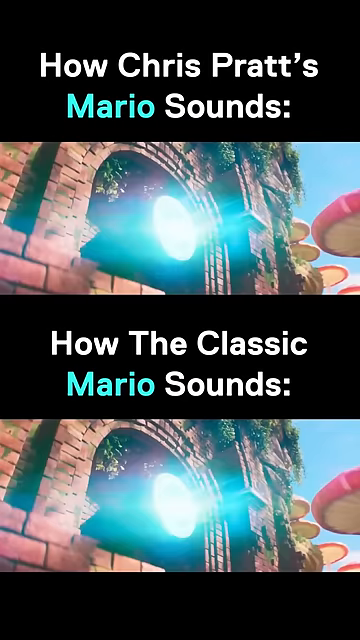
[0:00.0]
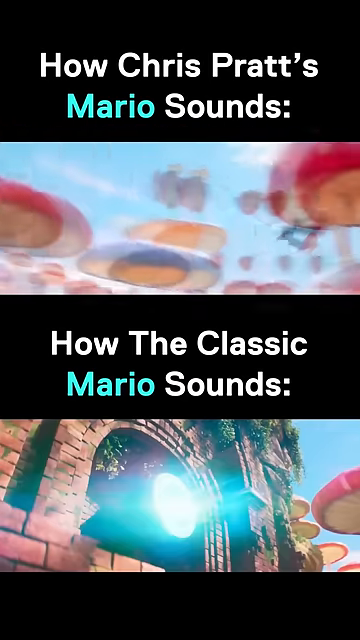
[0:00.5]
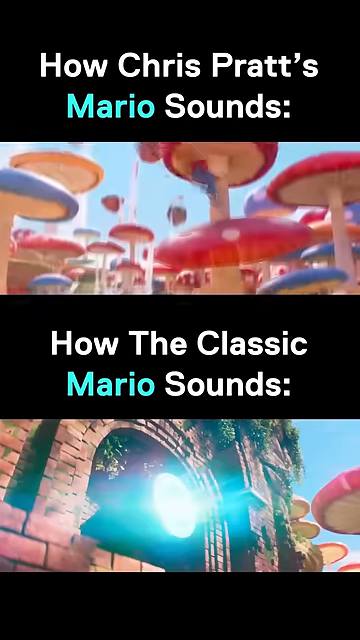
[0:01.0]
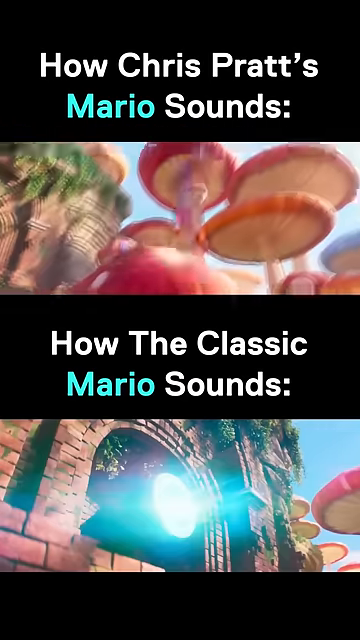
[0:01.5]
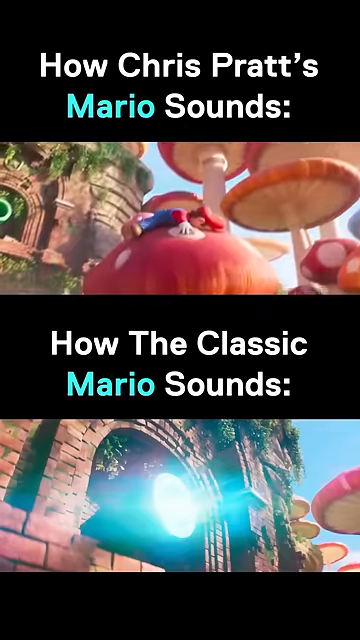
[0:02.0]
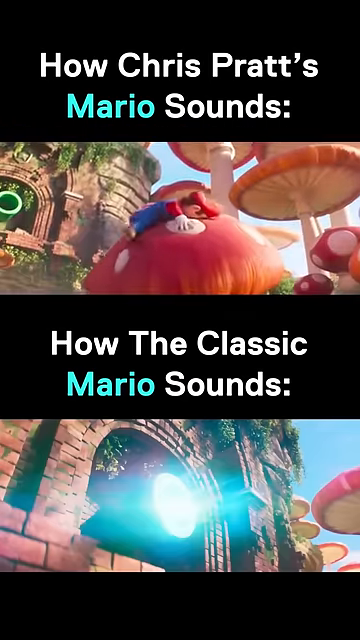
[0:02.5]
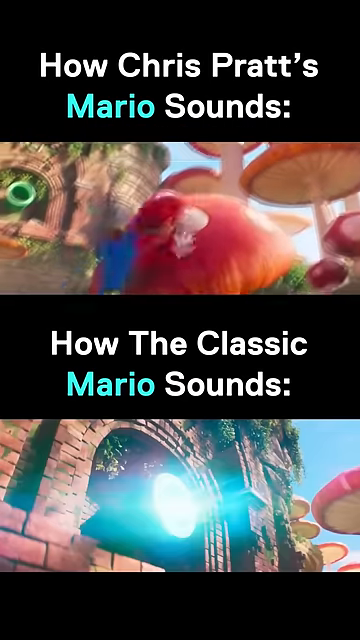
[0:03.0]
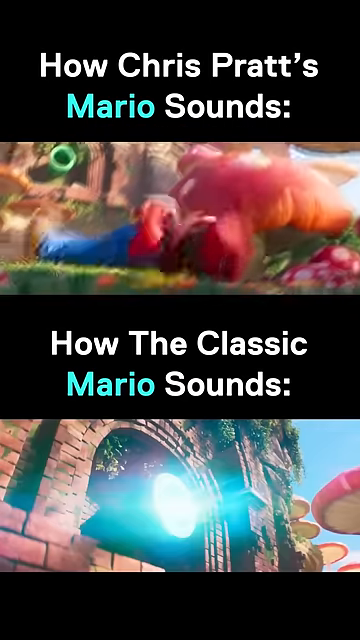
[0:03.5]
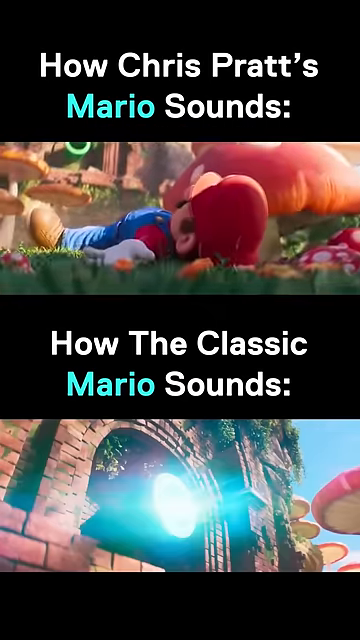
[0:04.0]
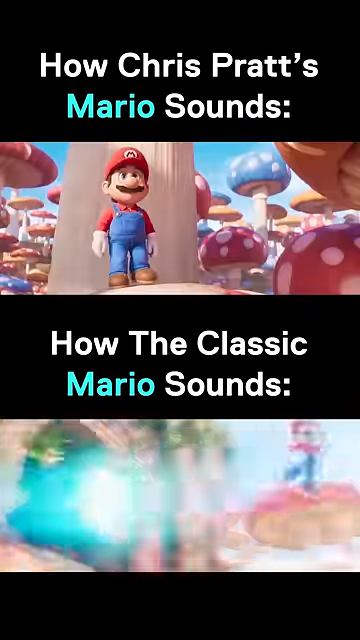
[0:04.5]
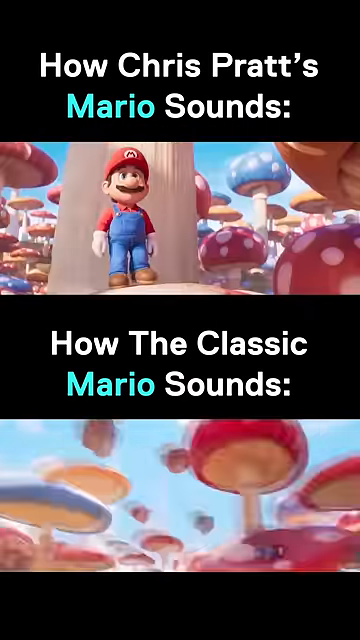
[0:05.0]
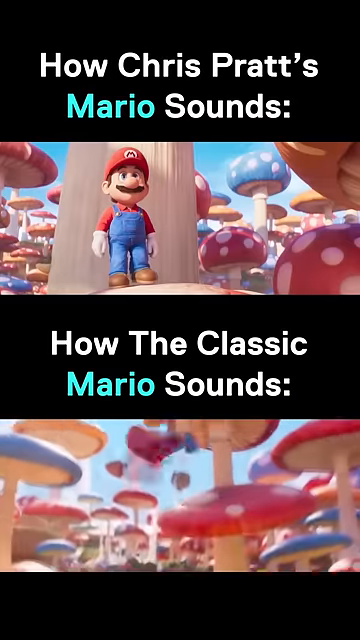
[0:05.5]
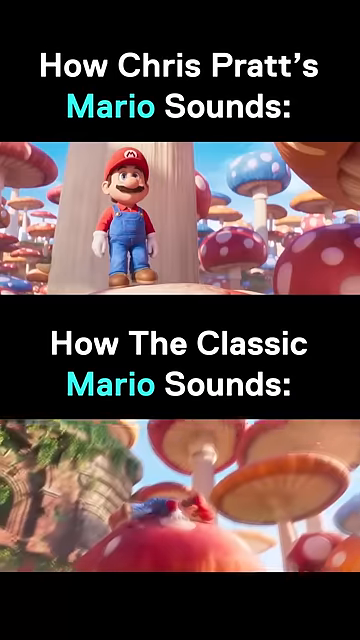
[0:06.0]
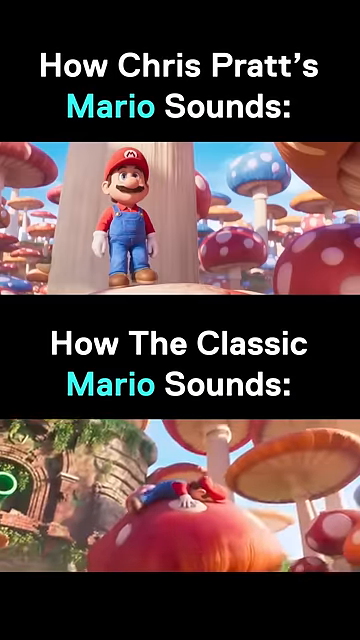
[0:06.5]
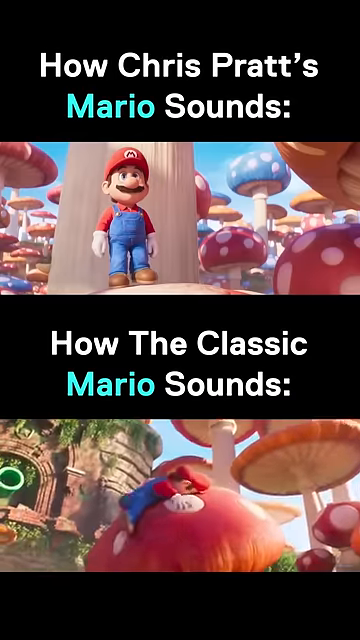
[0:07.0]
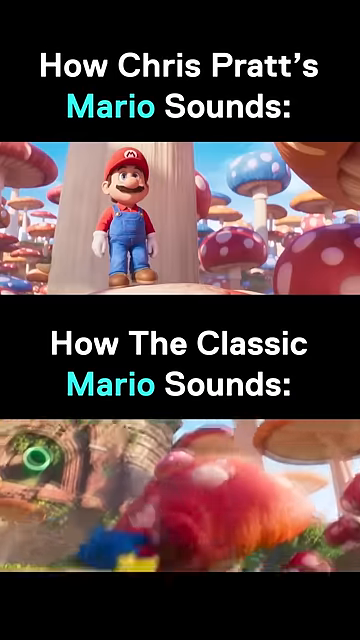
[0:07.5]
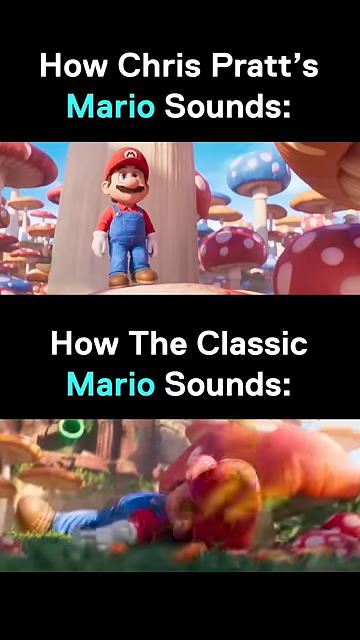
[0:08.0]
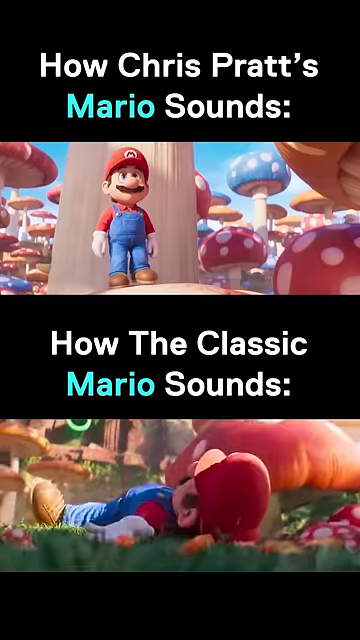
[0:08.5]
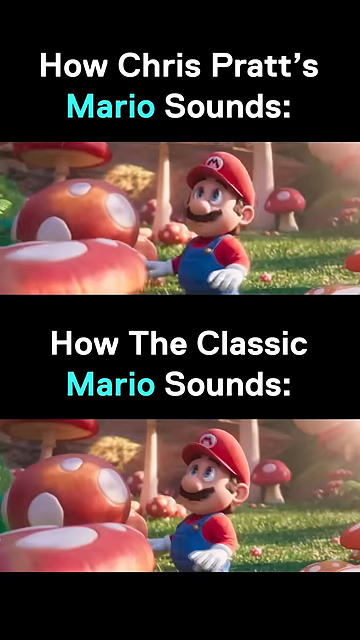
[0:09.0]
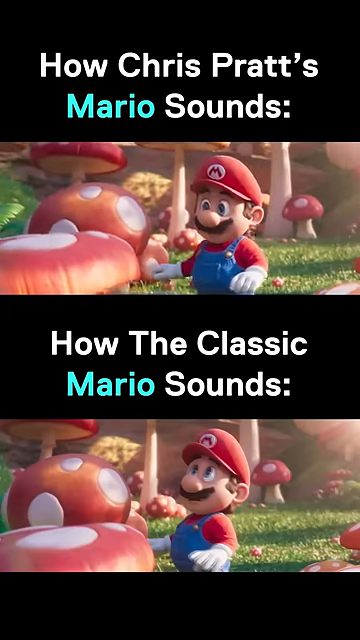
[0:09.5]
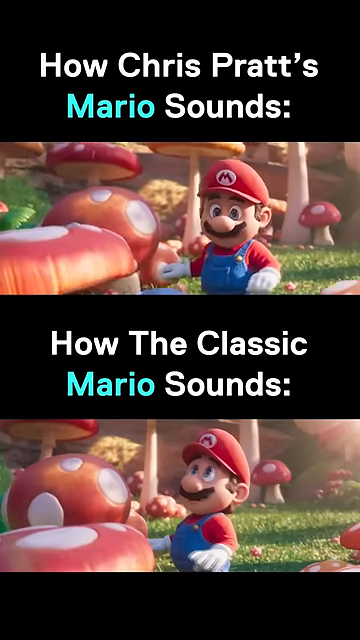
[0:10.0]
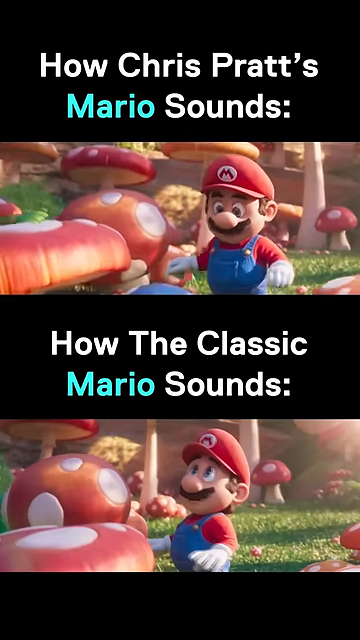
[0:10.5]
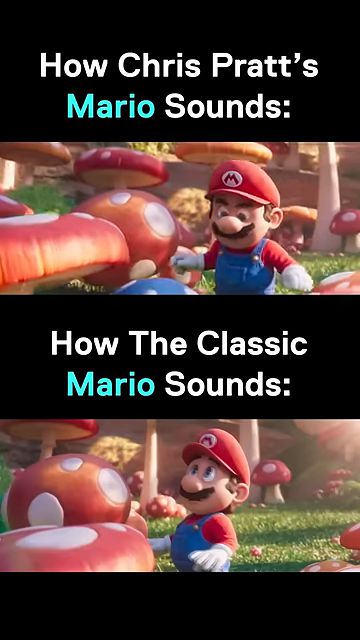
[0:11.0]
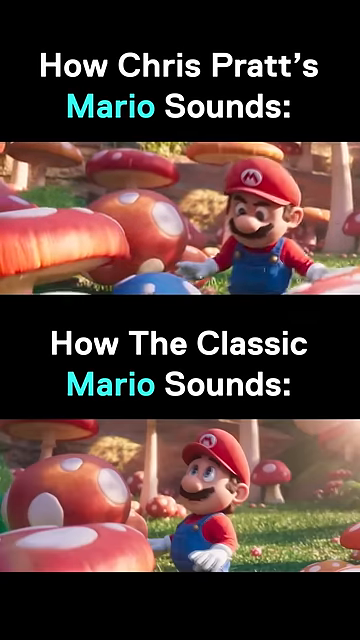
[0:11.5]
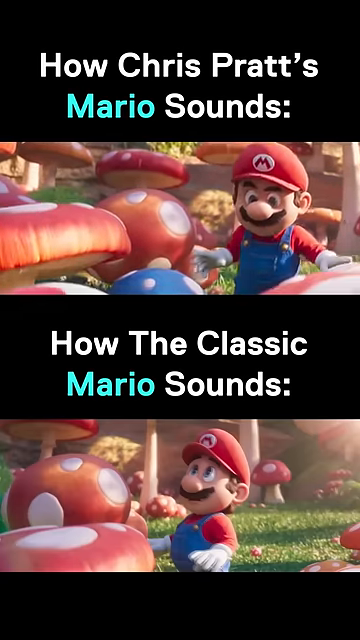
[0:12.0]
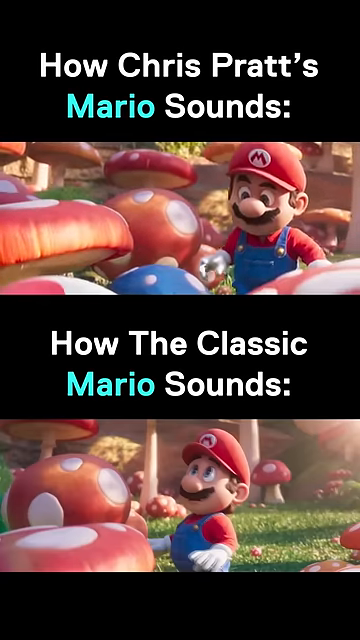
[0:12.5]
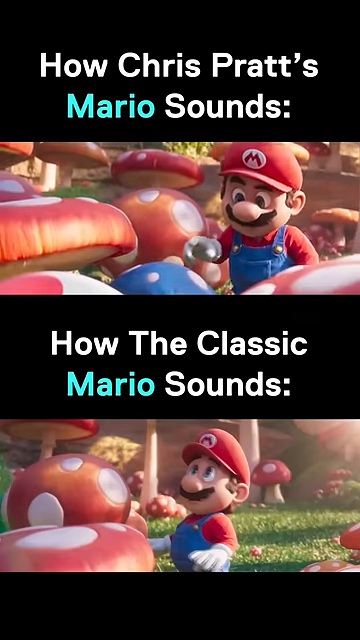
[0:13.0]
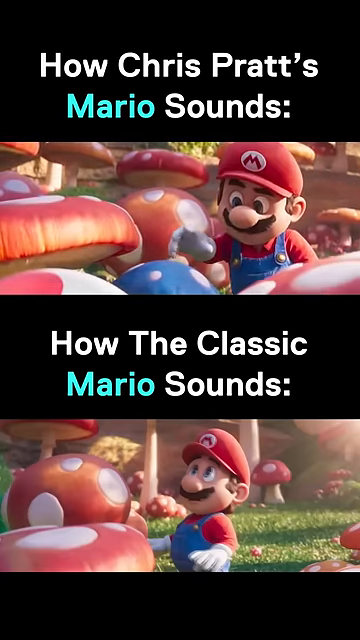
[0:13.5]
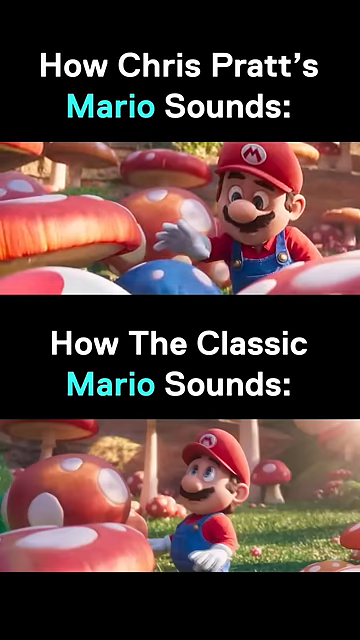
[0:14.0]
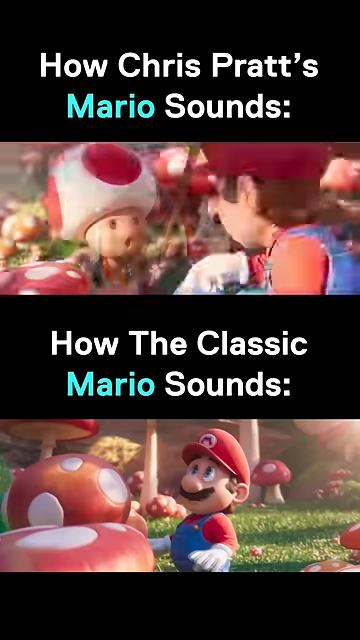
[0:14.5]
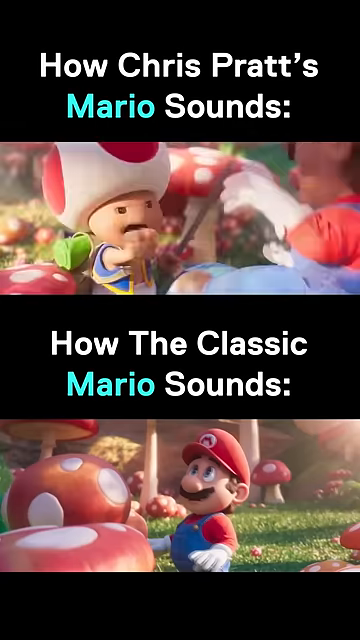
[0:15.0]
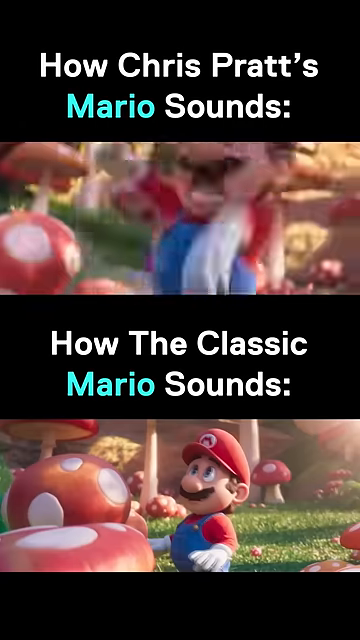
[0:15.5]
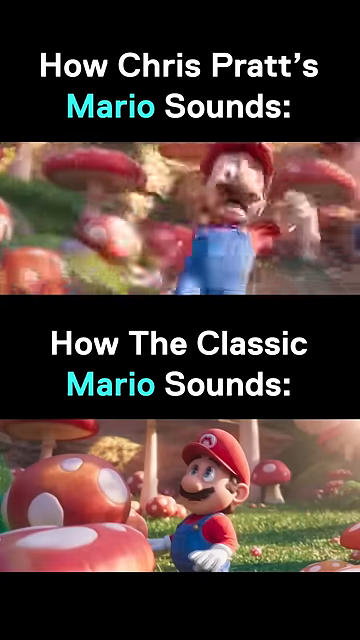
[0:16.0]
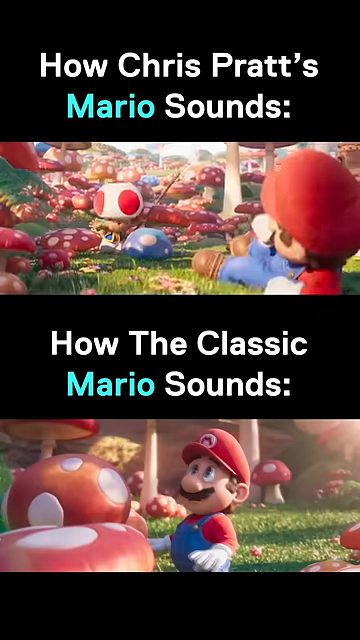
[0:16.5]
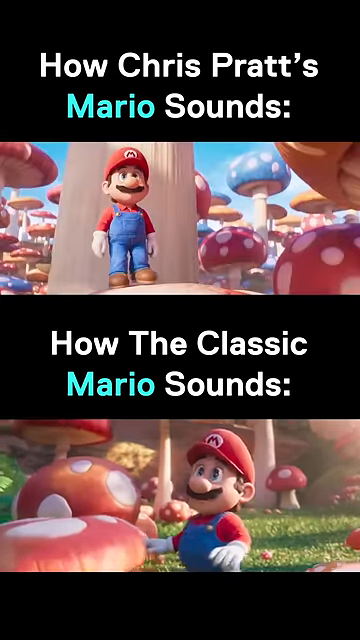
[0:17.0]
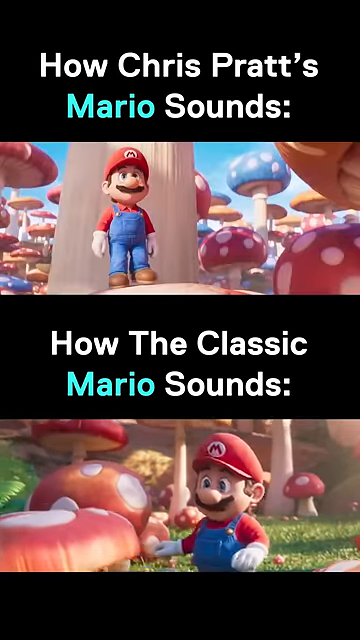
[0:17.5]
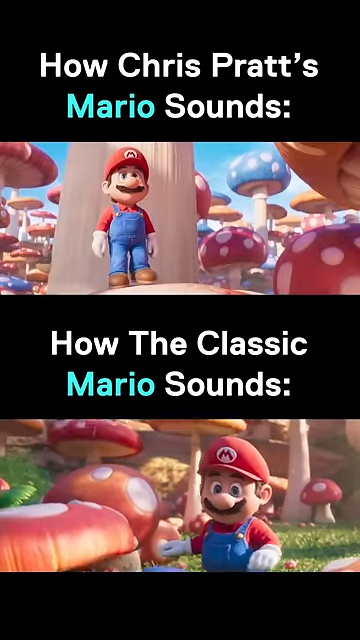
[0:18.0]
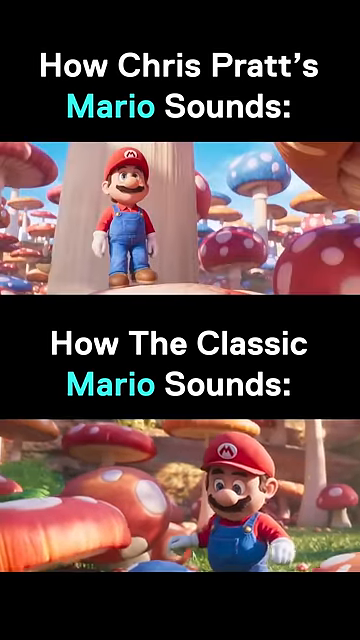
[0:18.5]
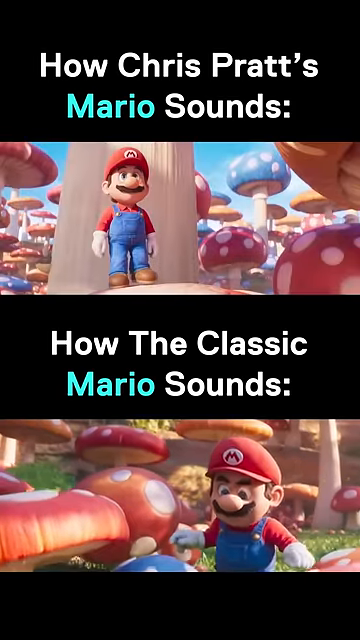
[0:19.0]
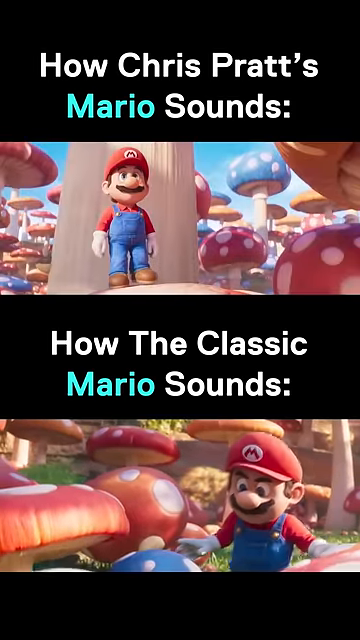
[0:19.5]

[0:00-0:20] Taken from the Super Mario movie, the screen is split into an upper section and a lower section. In the upper section, a caption says "how Chris Pratt's Mario sounds," and below it a video shows Super Mario jumping out of what looks like an opening in a castle, or a window. He comes flying out, lands on top of a mushroom, bounces off it, lands on another mushroom, and then falls back to the ground. Below this is the second part, where a caption reads "how the classic Mario sounds," and a video shows the same Mario character shooting out of an opening, a window of what looks like a castle. He bounces off a mushroom, lands on another mushroom, and then falls down onto the grass ground.